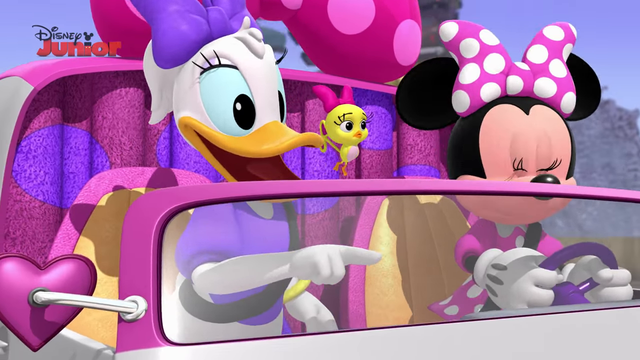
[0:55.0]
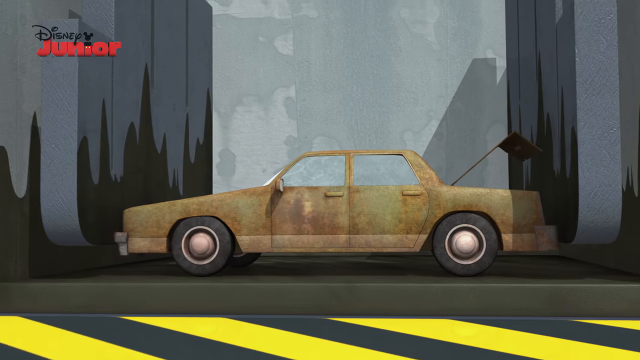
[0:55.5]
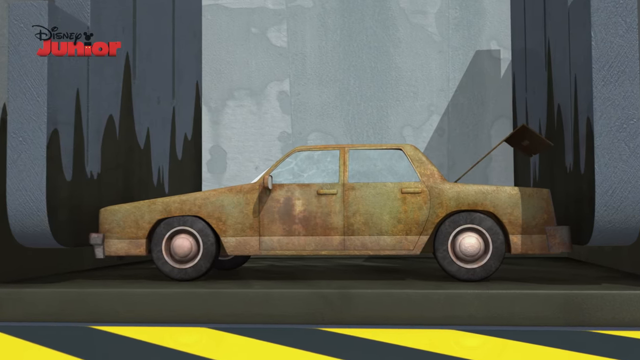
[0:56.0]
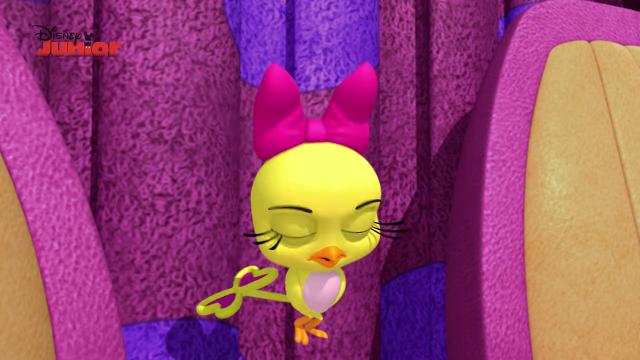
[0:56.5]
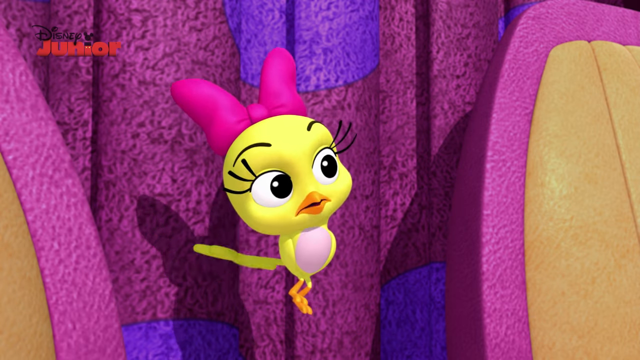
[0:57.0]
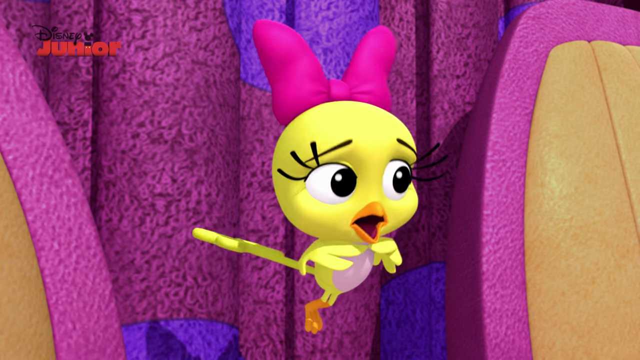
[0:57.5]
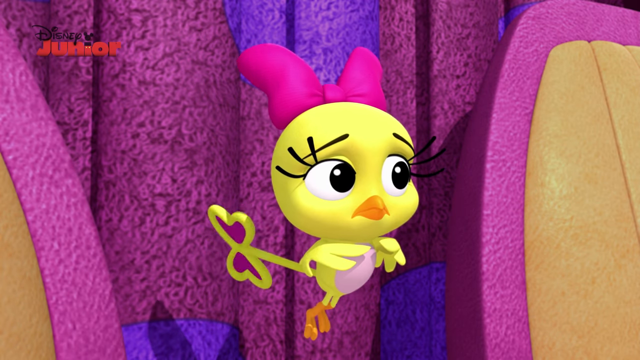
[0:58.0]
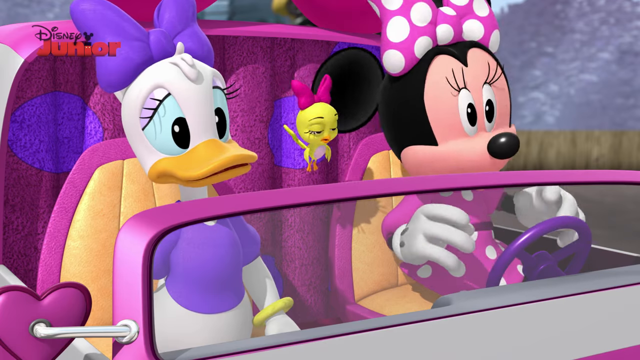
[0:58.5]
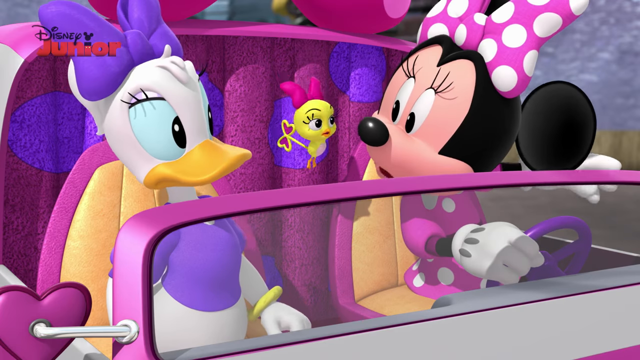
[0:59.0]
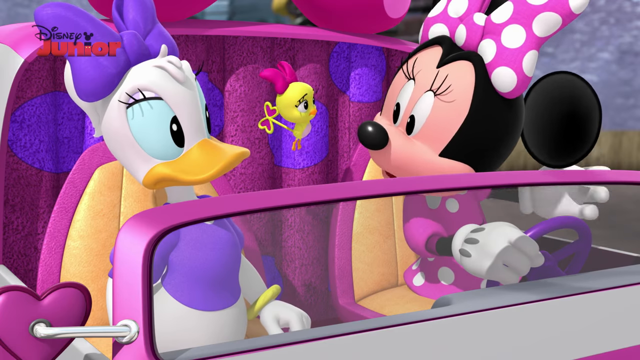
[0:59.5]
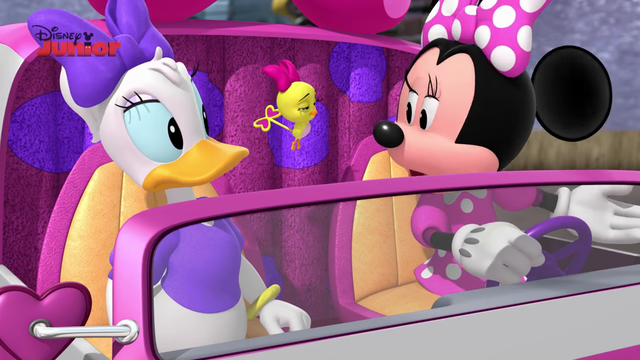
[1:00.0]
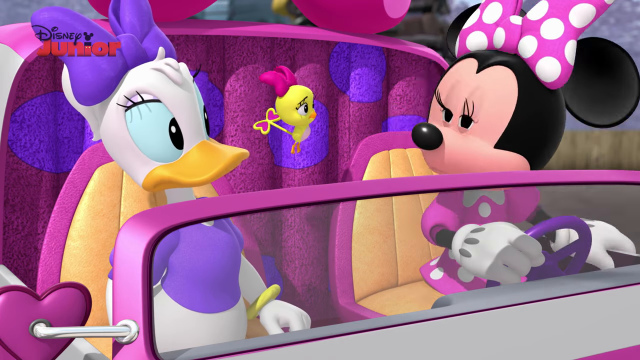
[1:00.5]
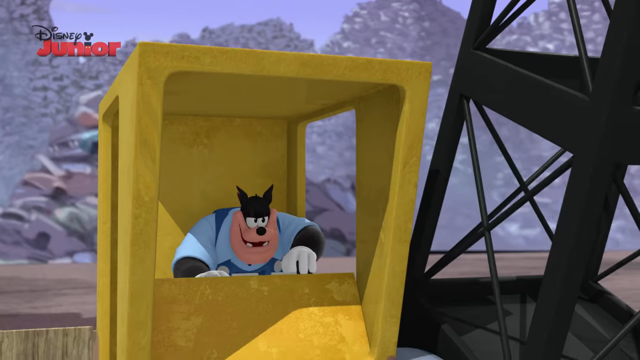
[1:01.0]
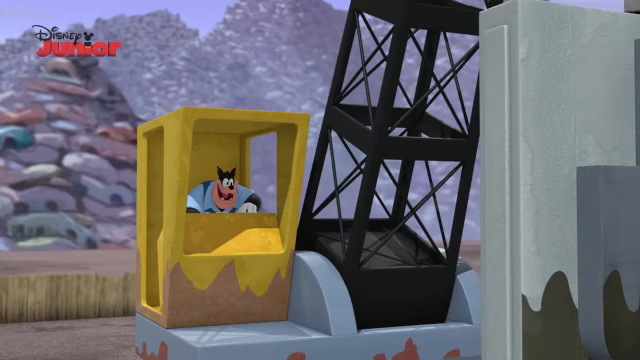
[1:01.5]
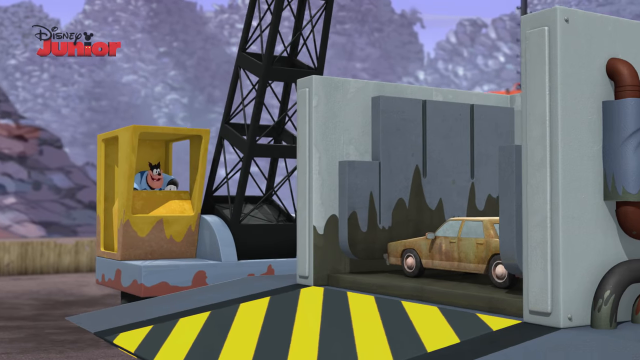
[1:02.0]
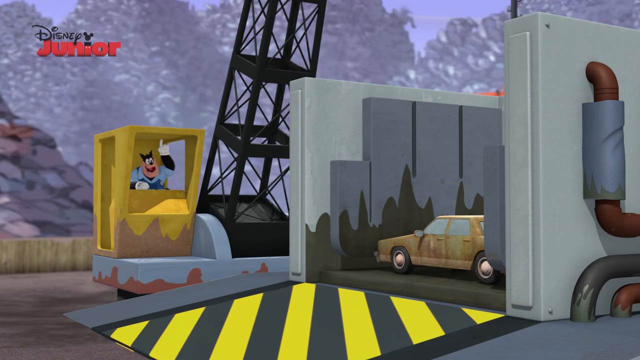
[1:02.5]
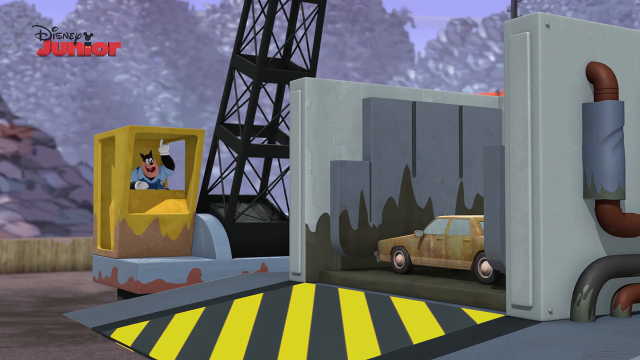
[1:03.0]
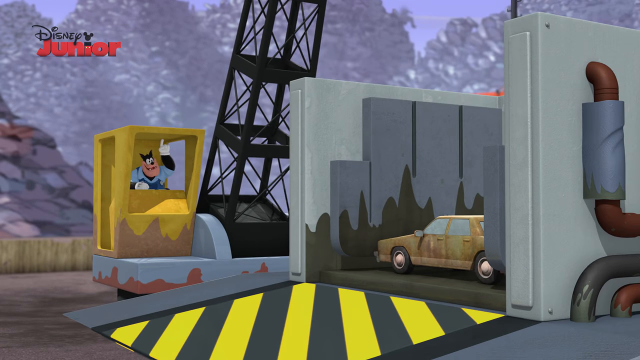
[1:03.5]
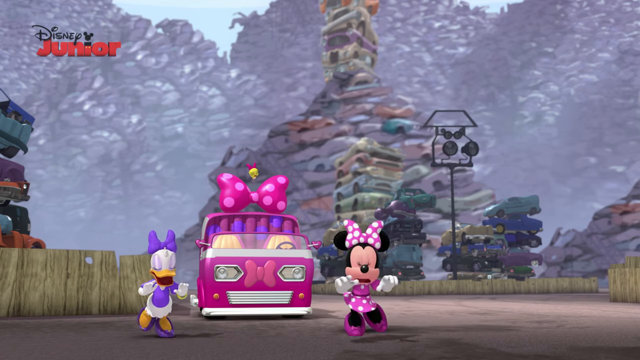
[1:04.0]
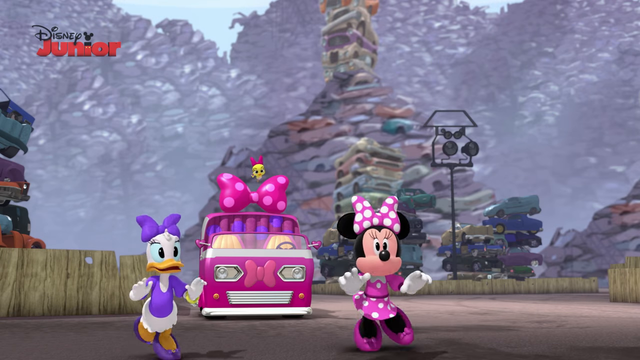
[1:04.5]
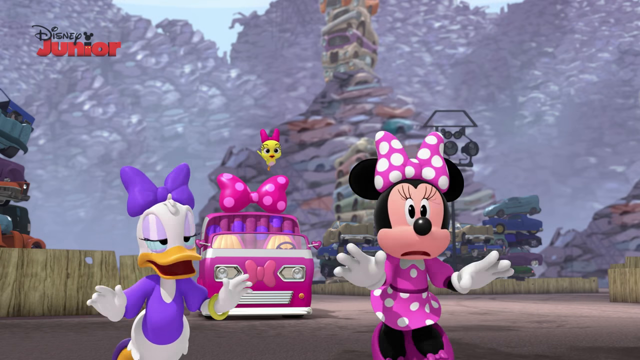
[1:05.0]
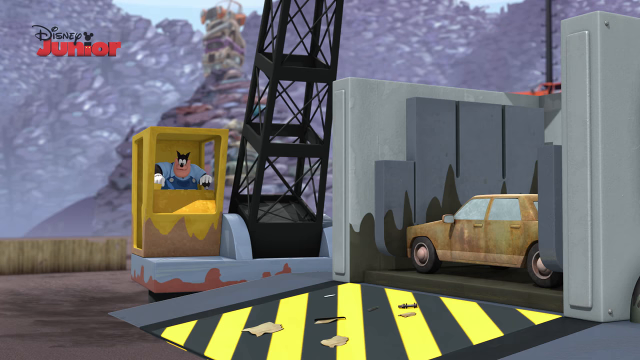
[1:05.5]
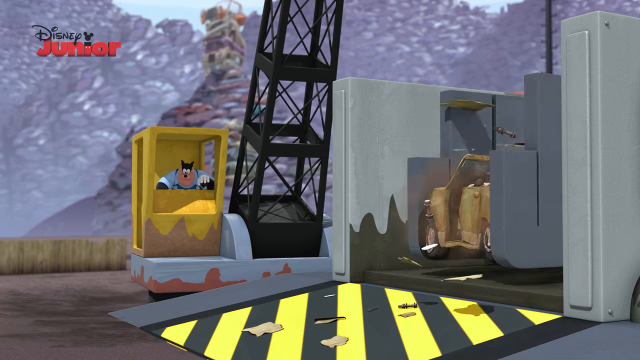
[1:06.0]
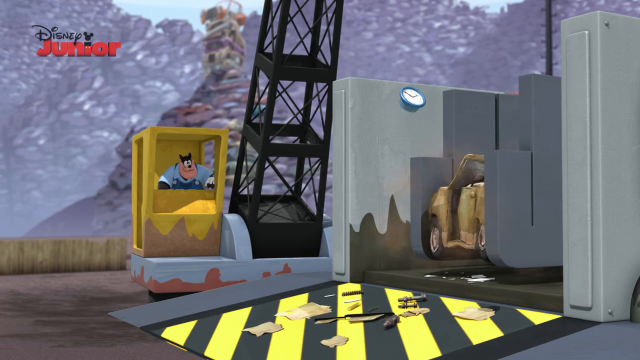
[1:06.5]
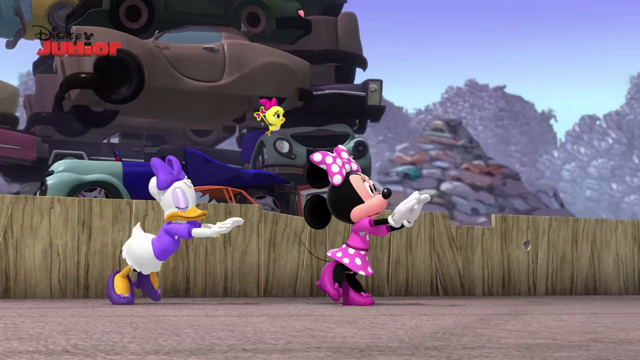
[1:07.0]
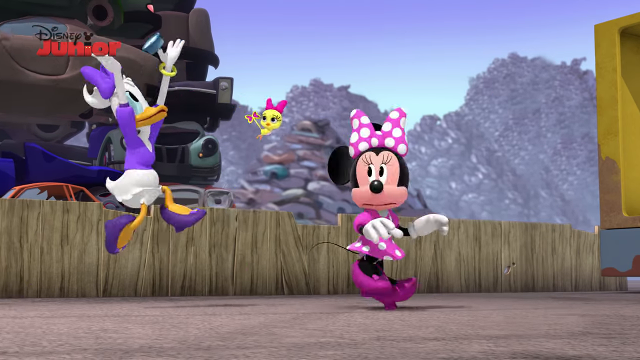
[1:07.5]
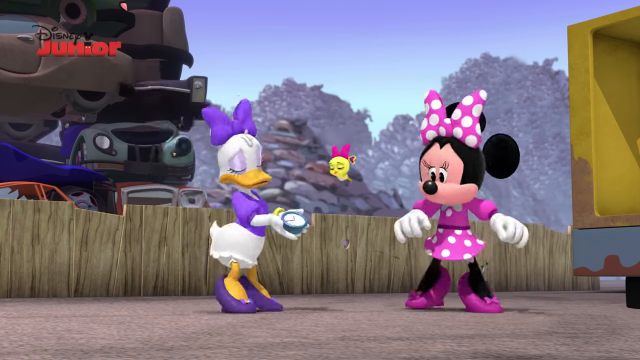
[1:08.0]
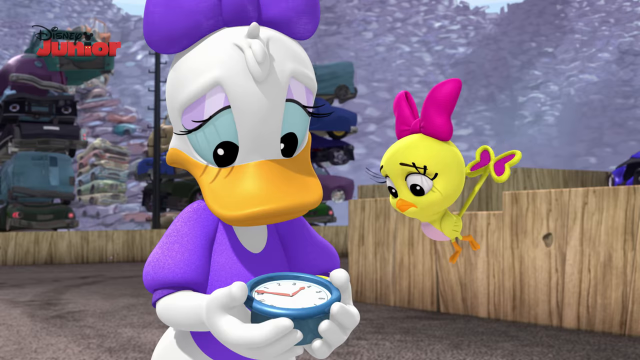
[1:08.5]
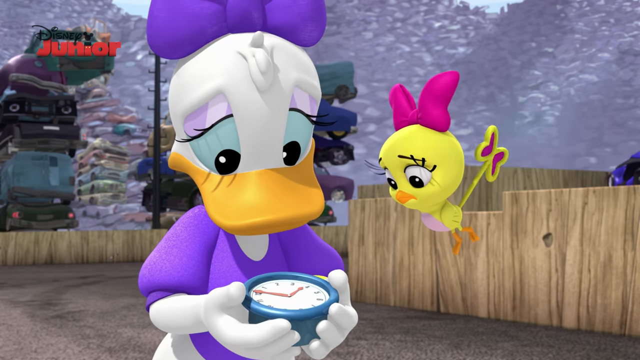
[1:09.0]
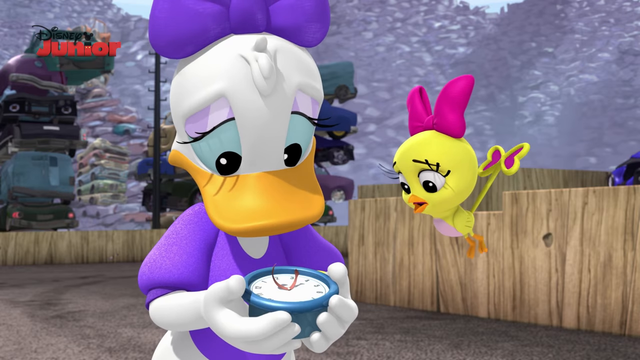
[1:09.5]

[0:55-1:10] Daisy is pointing at the car in the trash compactor. The car is a very light yellow with a lot of rust and looks like an older car; it has not yet been compacted but is in danger. A close-up shows the cuckoo bird talking to Daisy and Minnie, who are off screen. All three are then seen still in the van, Minnie talking to the other two, and then all three exit the van. Pete, in the yellow crane control booth, is thoroughly enjoying his job; he holds up his hand with a finger pointed to the sky as he prepares to press the big red button to compact the car. The two women run toward the camera, apparently yelling "Stop!" and looking very worried, but Pete hits the button. The trash compactor slams the car and condenses it into a pile of garbage. As it compacts, something flies off the car toward the left side of the screen, moving too fast to be easily identified. The scene cuts back to the running characters, still running toward the compacted car: Minnie in the lead, followed by the yellow cuckoo bird, with Daisy last. Daisy leaps into the air and catches the flying object with both hands. She lands and looks at it; it is quite round and seems to be a clock face, possibly the face of the cuckoo clock, with two hands, not the entire clock. Daisy looks at it mournfully and sadly. The yellow cuckoo bird hovers over her right shoulder, also looking at the clock face and looking quite sad.